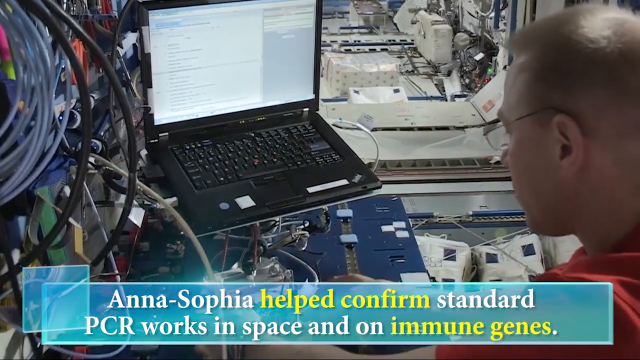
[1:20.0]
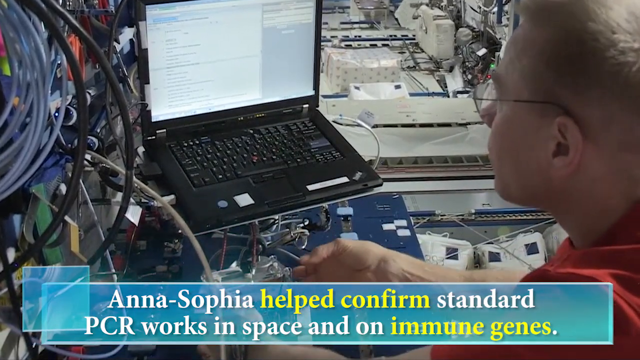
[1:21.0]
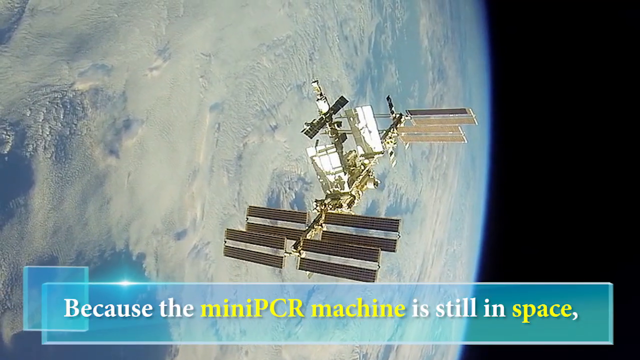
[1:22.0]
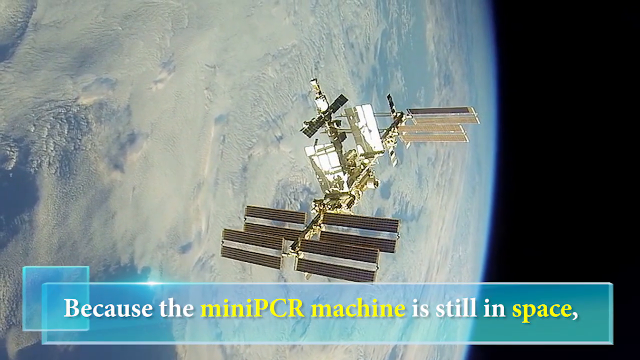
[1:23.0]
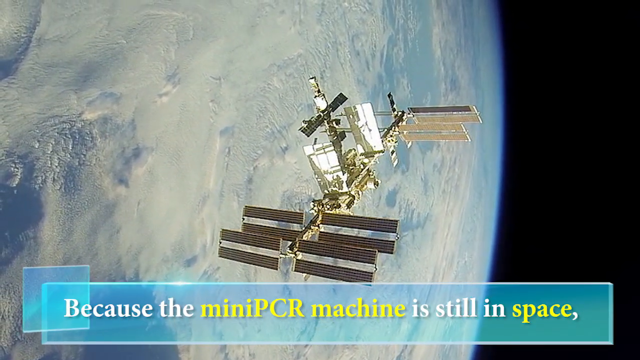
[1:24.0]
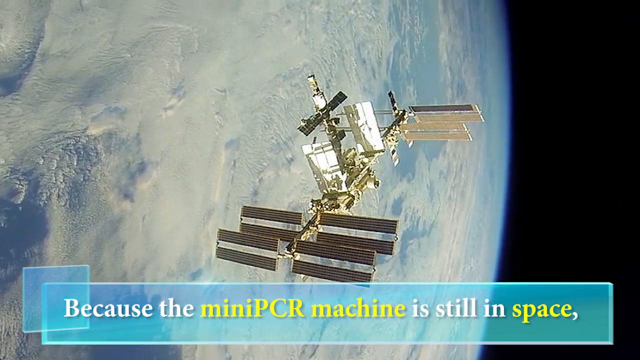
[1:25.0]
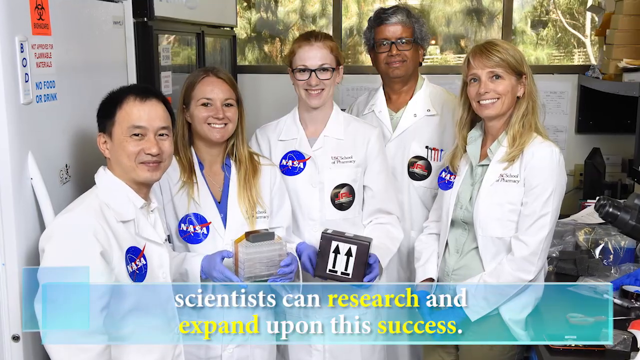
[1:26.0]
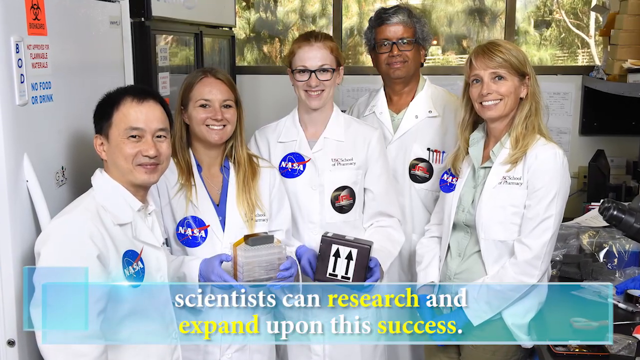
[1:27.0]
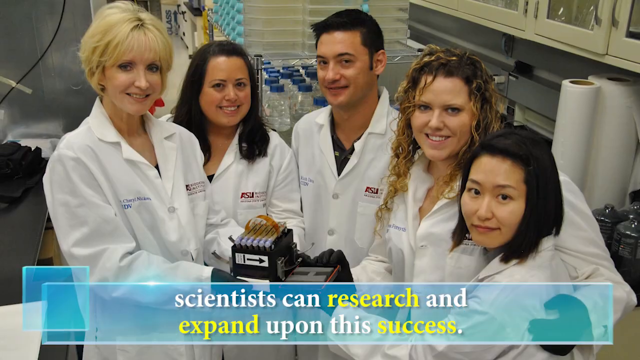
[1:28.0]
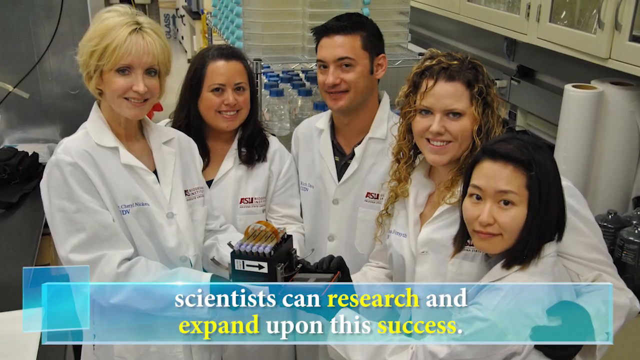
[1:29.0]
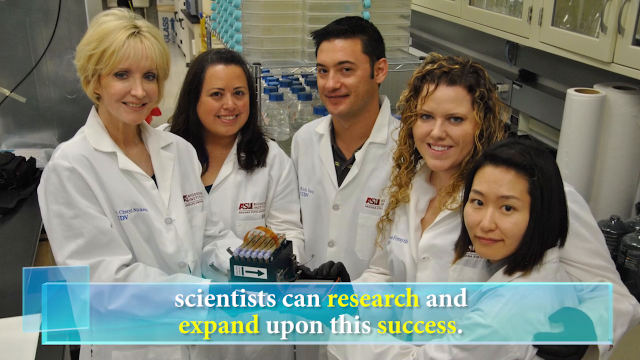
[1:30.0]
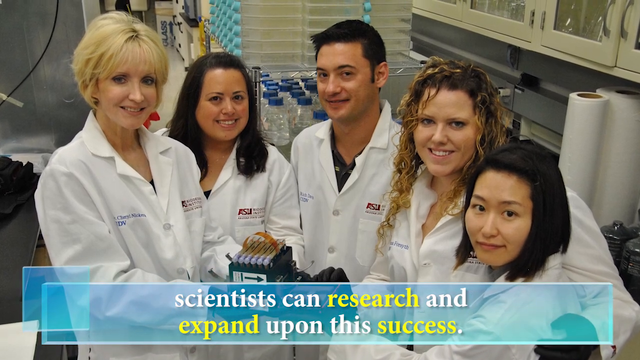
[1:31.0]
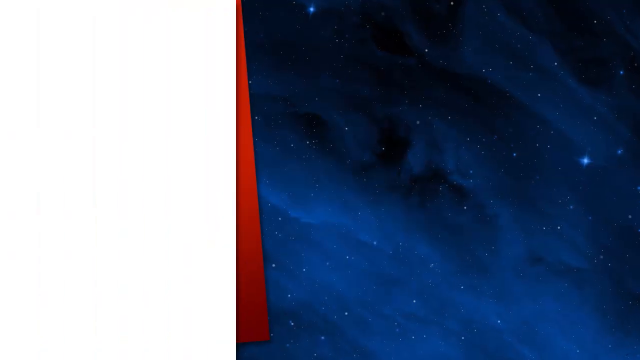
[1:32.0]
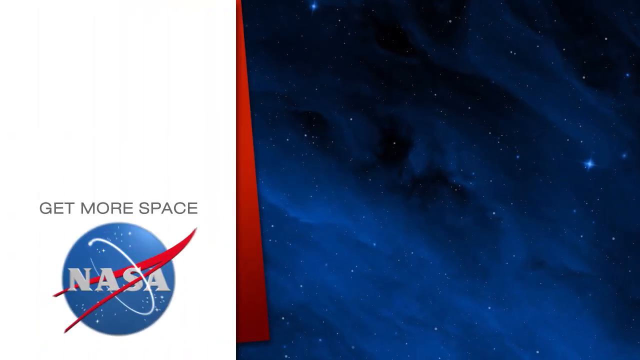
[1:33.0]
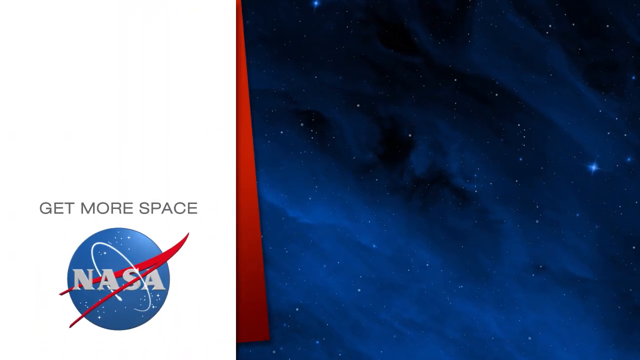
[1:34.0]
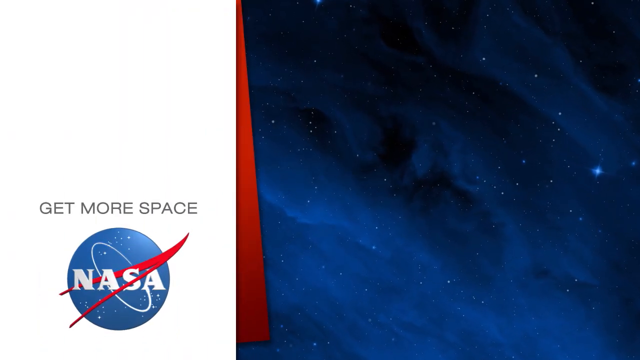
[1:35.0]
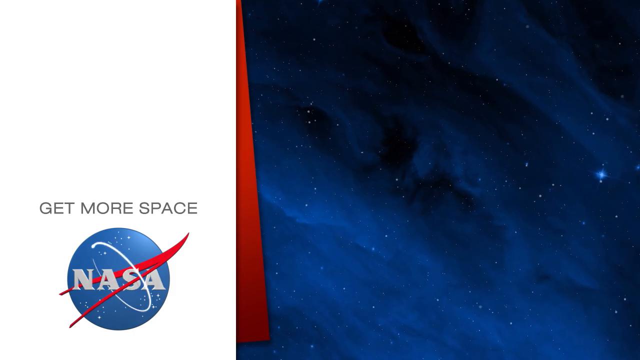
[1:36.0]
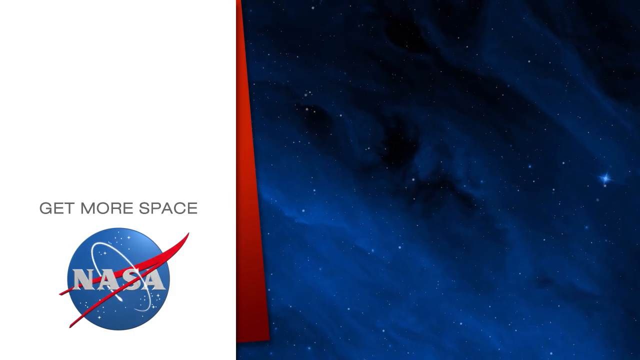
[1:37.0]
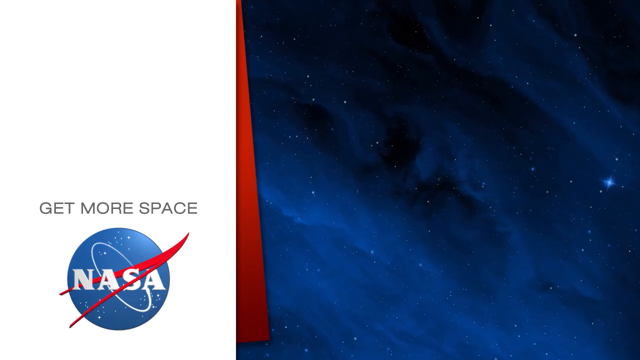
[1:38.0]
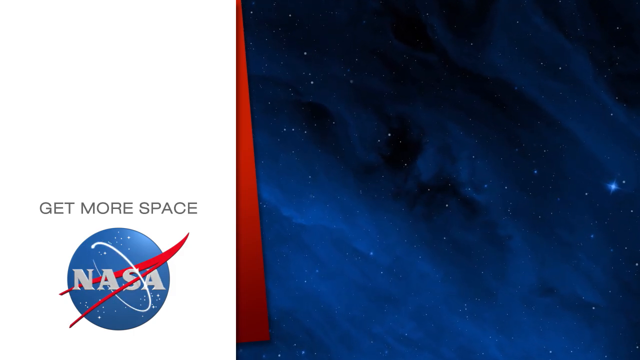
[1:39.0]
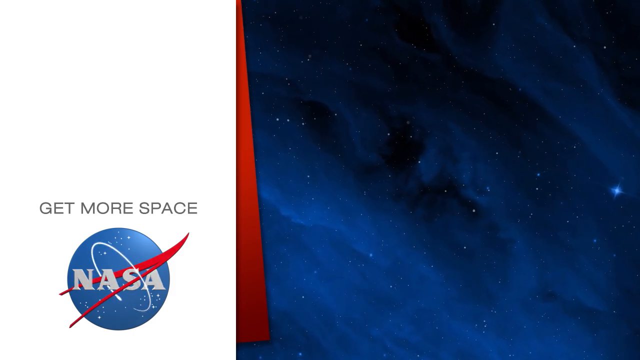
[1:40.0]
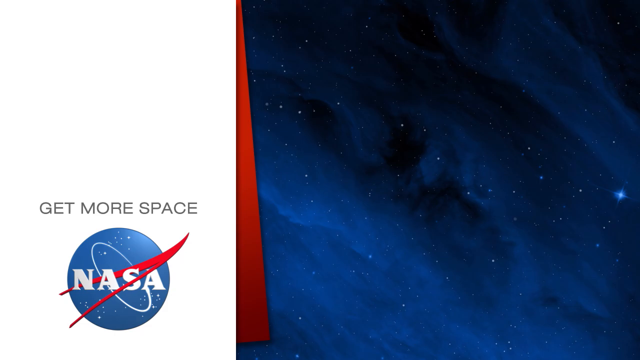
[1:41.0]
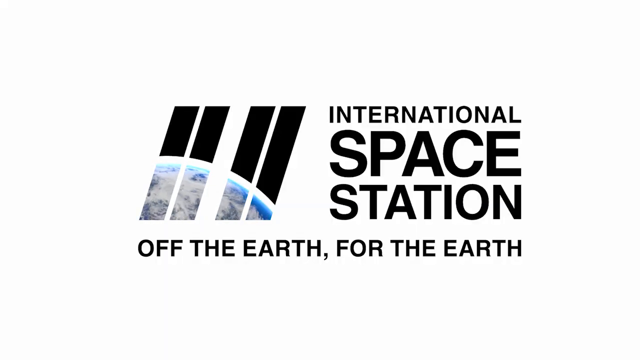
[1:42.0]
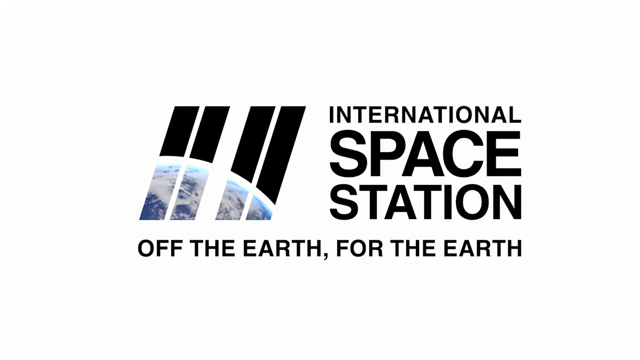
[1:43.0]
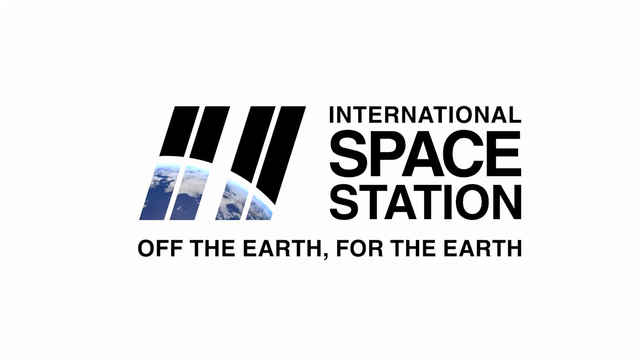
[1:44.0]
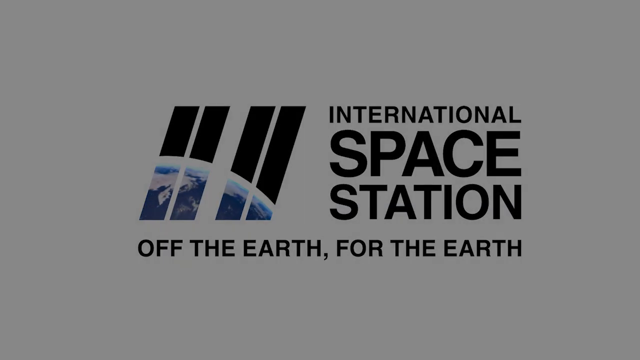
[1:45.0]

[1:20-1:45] A man wearing glasses looks at a very old computer, with a bunch of cables and other technical equipment surrounding him. A blue banner at the bottom has white and yellow text reading "Anna Sophia helped confirm standard PCR works in space and on immune genes because the mini PCR machine is still in space." The machine floats in space with Earth kind of surrounding it. Another banner with white and yellow text reads "scientists can research and expand upon the success." NASA scientists stand around in white uniforms with NASA logos on them, holding different equipment in their hands; two of them wear glasses. The camera pans in before it flashes to another image: a group of people standing together for a photo, holding the machine, as the camera kind of pans up. Next is kind of outer space, blue with many stars, and a white box on the left with black text reading "get more space" and the NASA logo underneath. The NASA logo kind of swirls, then a white background shows bolded black text reading "international space station off the earth for the earth," with four lines showing the Earth spinning inside it, before the screen goes black.